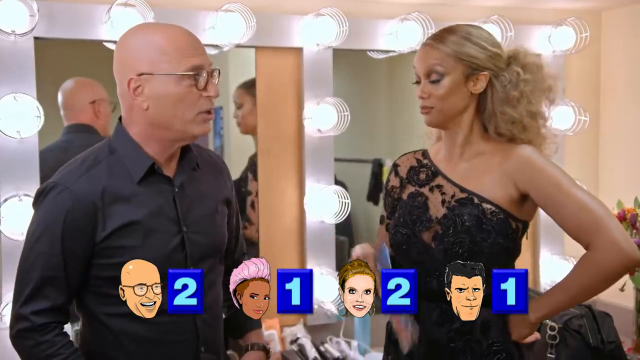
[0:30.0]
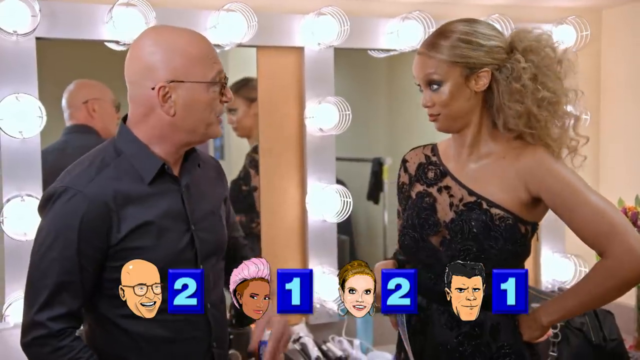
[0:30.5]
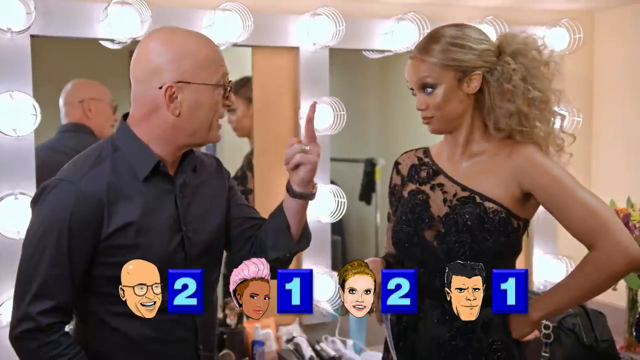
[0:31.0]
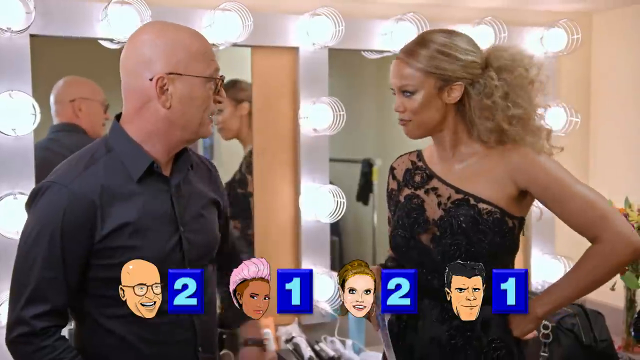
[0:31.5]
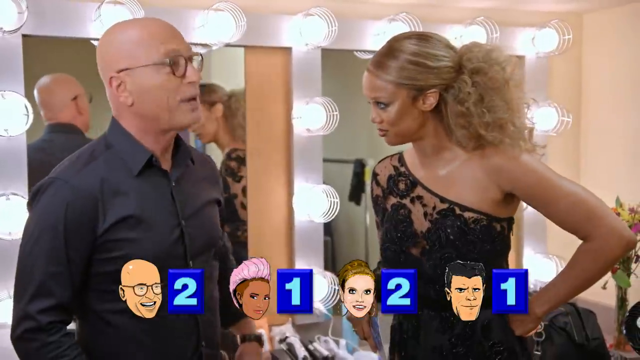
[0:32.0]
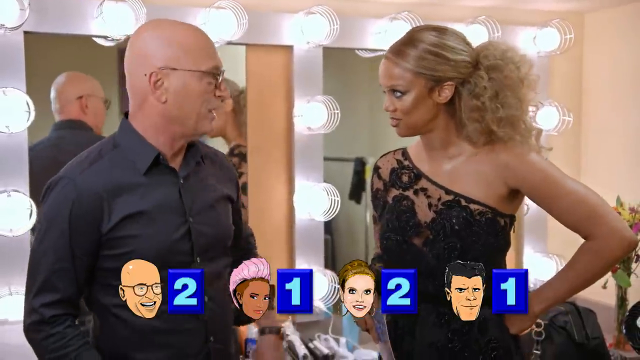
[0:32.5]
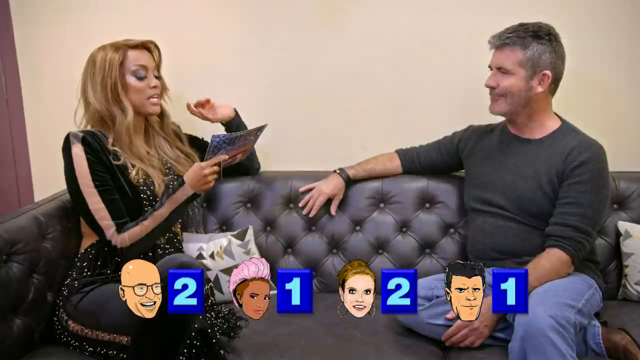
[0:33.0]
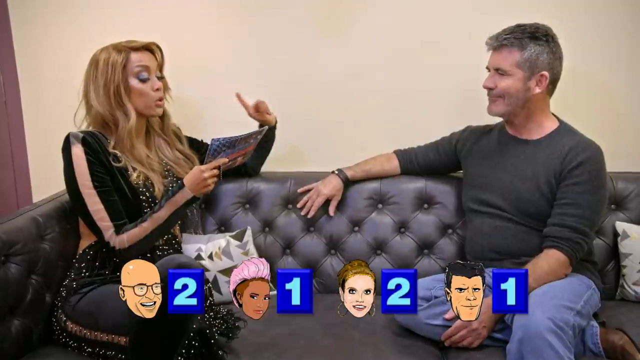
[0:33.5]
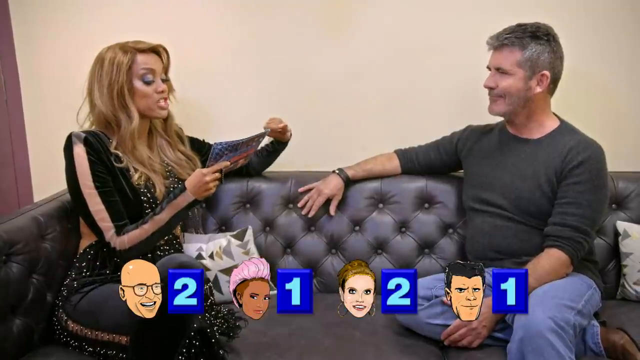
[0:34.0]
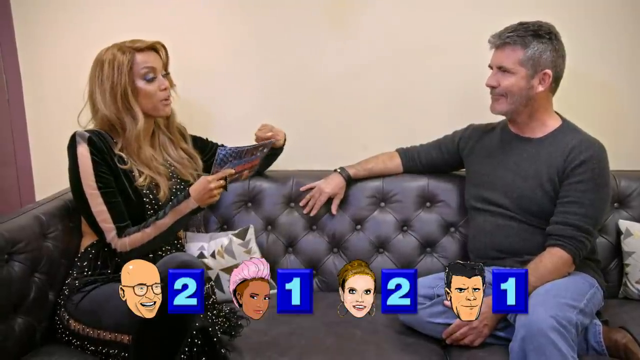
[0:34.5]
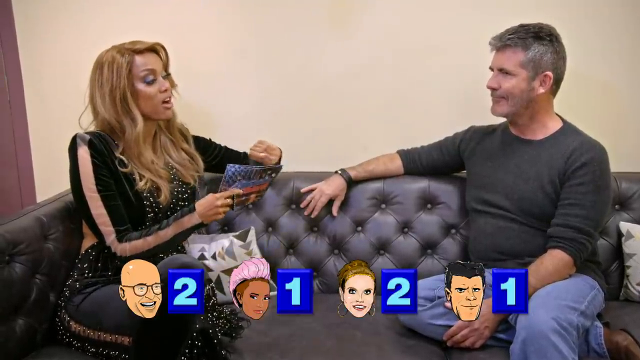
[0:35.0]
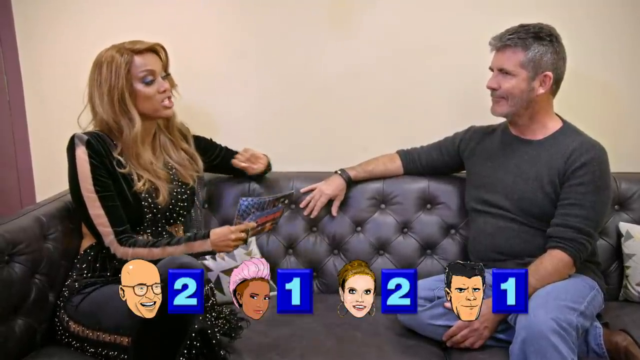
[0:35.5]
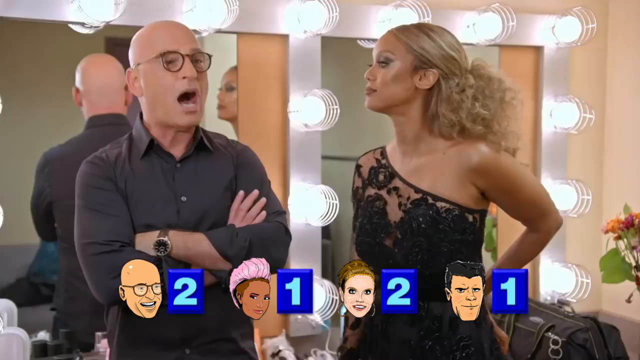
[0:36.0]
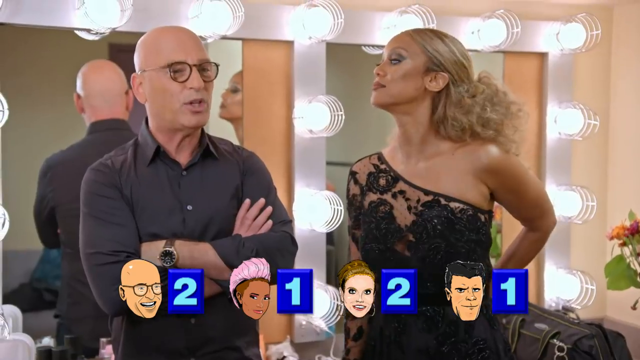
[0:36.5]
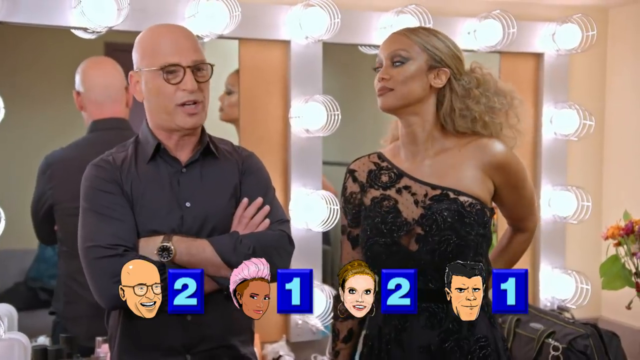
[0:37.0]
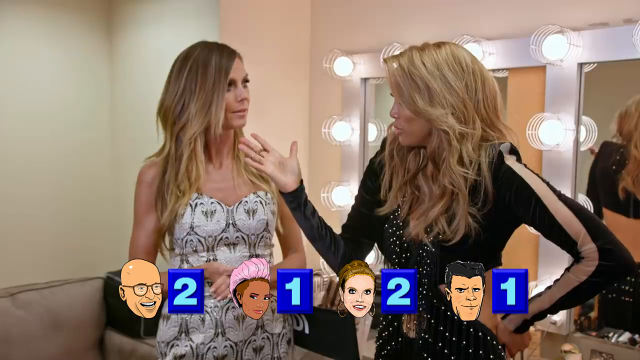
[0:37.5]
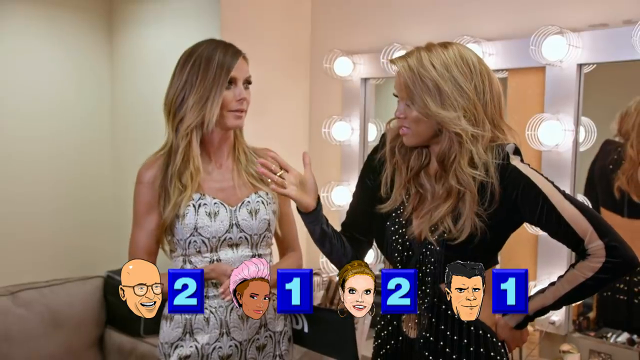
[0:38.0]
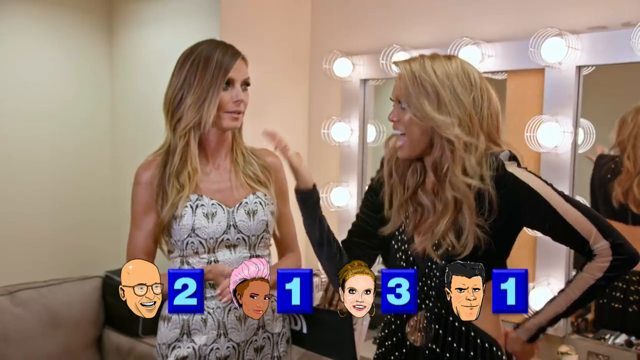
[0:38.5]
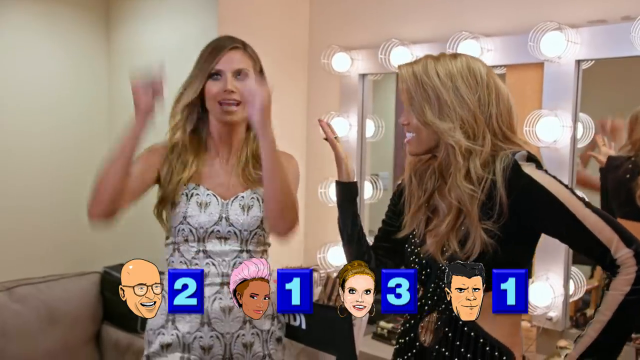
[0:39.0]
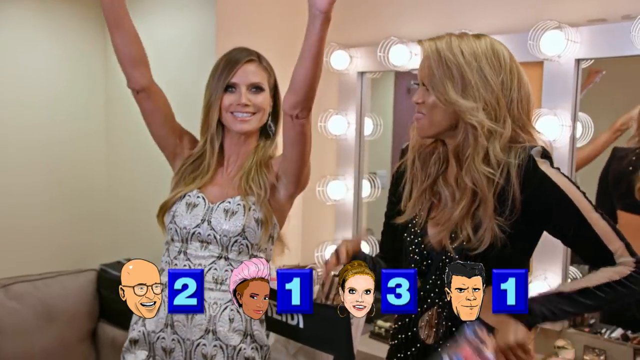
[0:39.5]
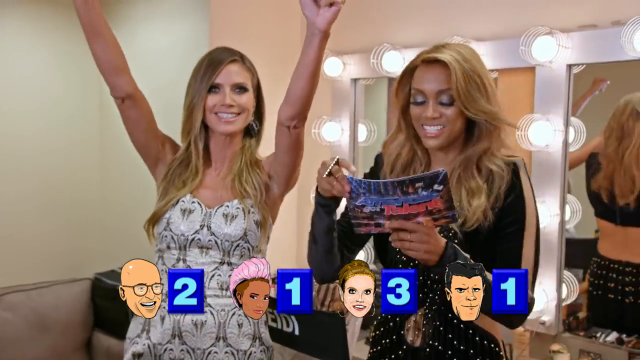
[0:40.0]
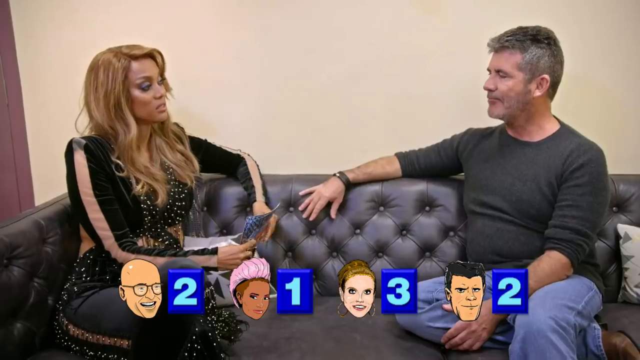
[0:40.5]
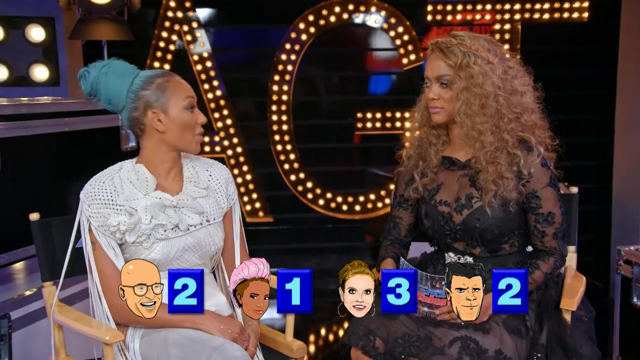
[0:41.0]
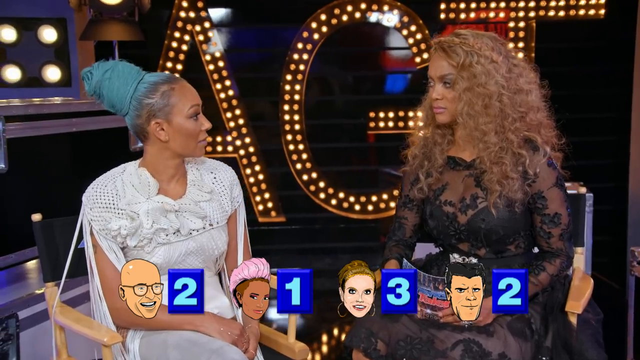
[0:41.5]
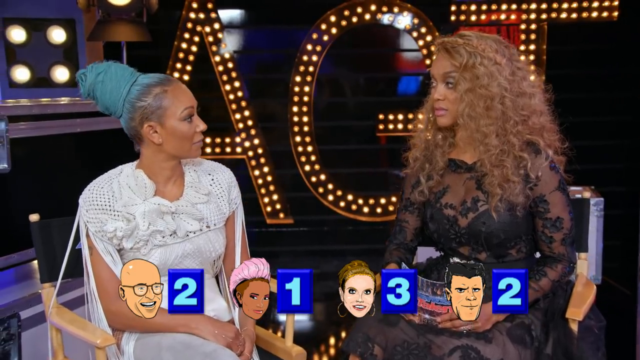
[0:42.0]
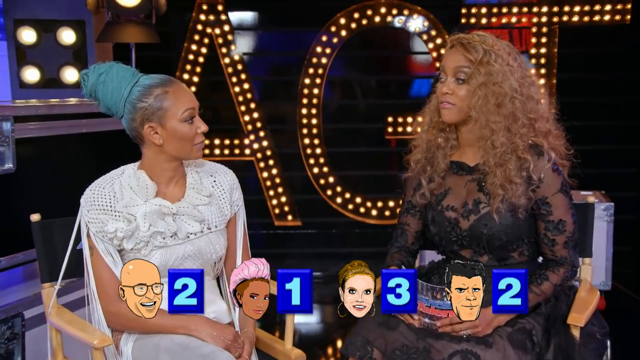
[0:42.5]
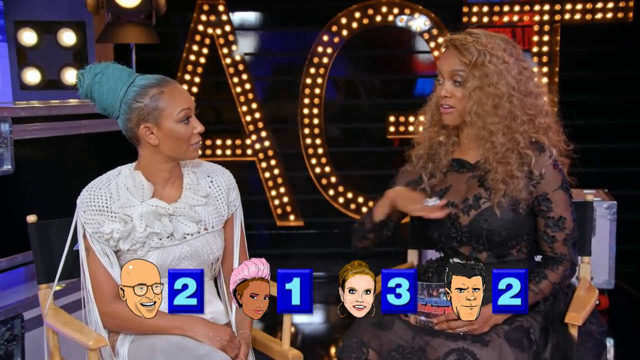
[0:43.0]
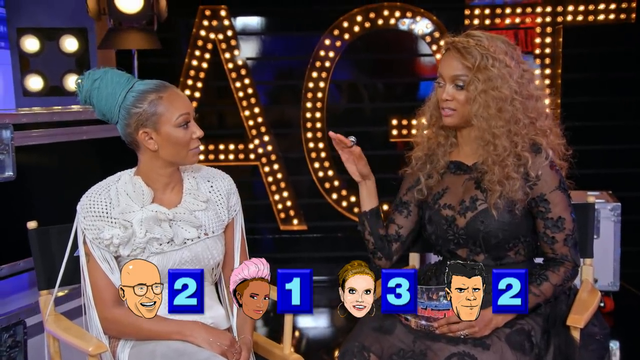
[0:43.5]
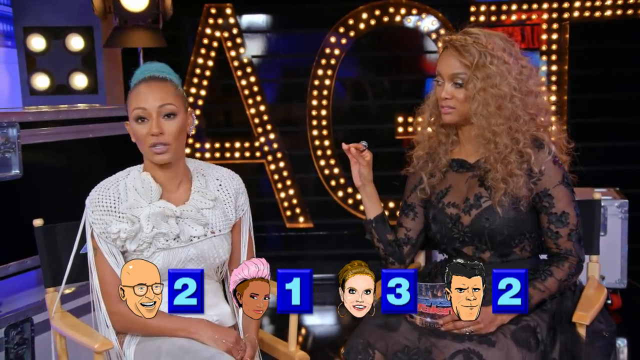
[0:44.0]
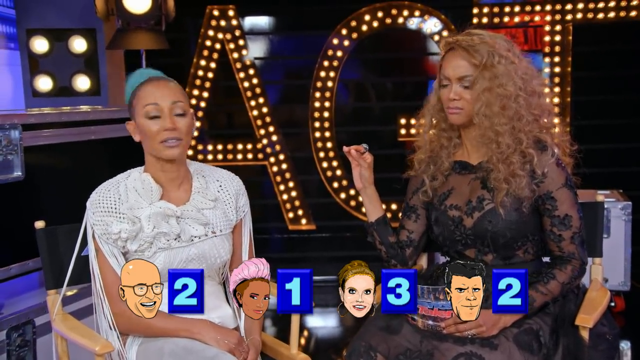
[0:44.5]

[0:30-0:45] Tyra Banks sits on a gray leather couch with Simon Cowell, asking questions while Simon faces her. The video jumps to Howie Mandel, who appears to answer defensively, arms folded and not facing her. With Heidi Klum the conversation is more pleasant: Heidi answers, then puts her arms up in a celebratory manner and appears to say something like yes or yeah. With the other female judge the conversation looks unpleasant; as Tyra asks questions, the judge looks one way and then back at Tyra. The conversation with Simon looks fairly serious; he sits on the couch with his arms stretched out toward her, kind of looking at her with a puzzled expression.